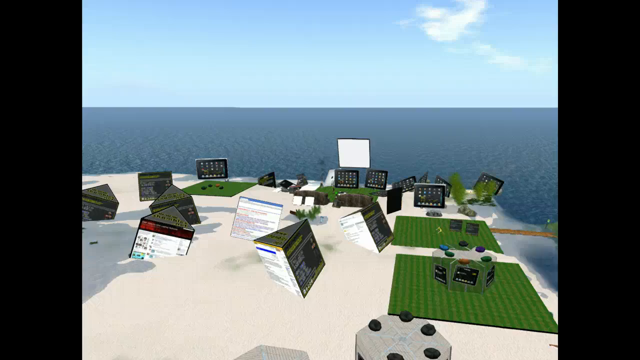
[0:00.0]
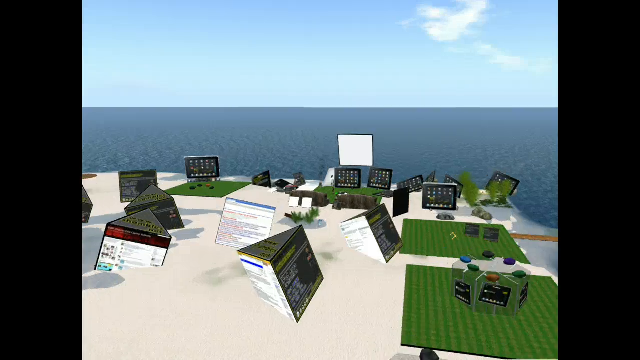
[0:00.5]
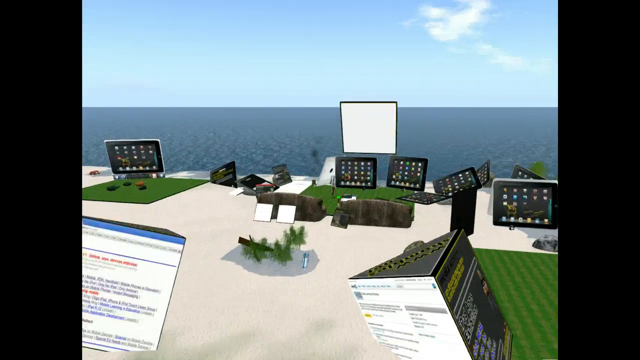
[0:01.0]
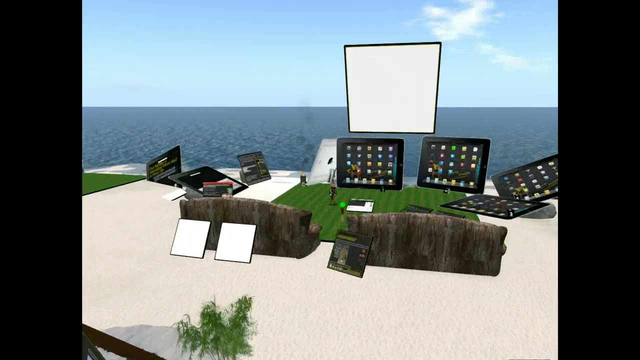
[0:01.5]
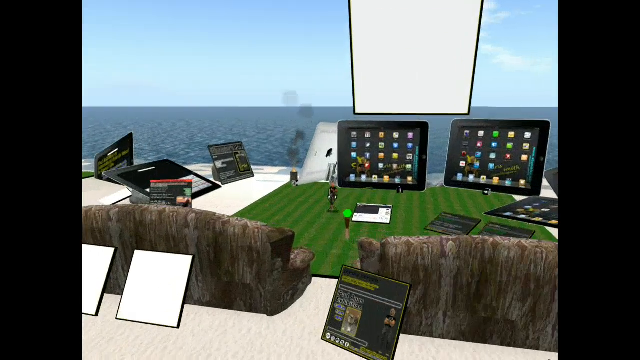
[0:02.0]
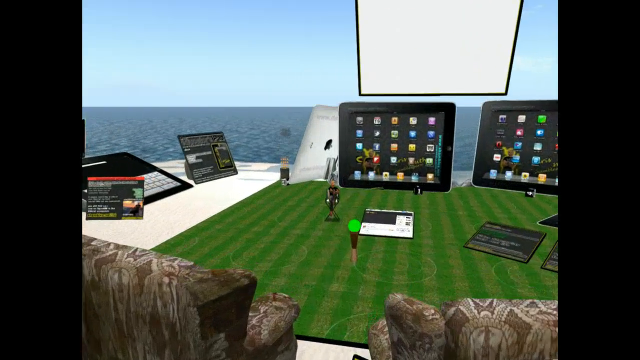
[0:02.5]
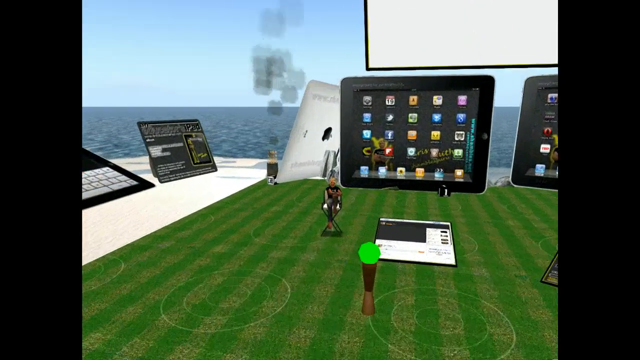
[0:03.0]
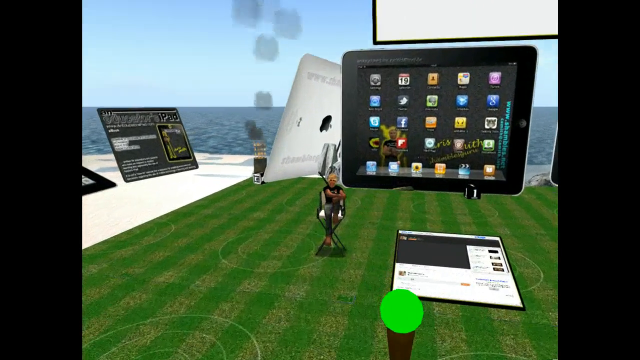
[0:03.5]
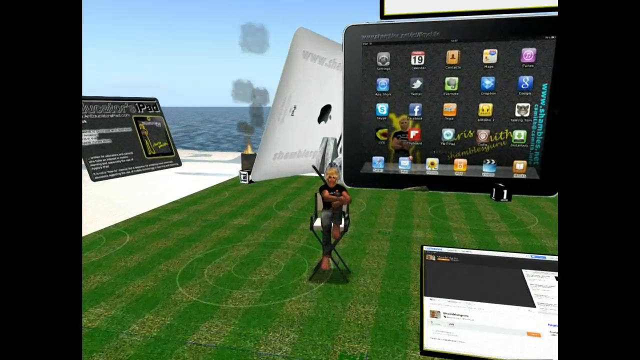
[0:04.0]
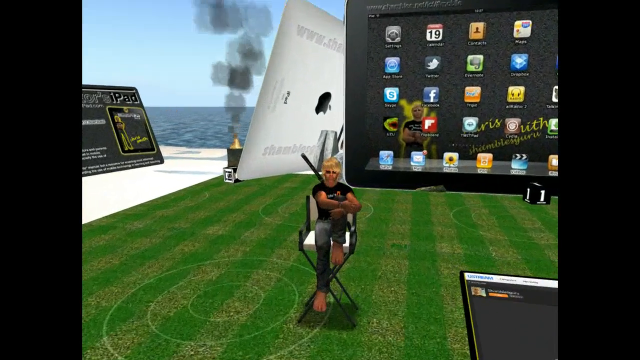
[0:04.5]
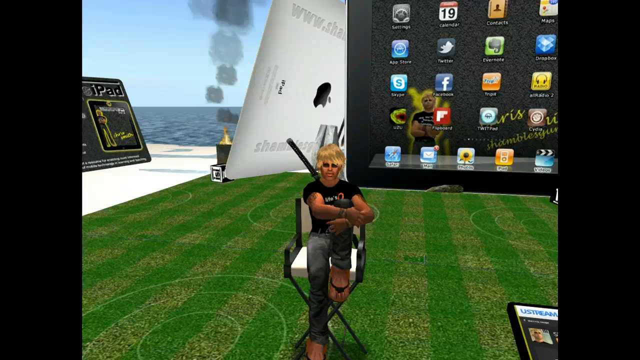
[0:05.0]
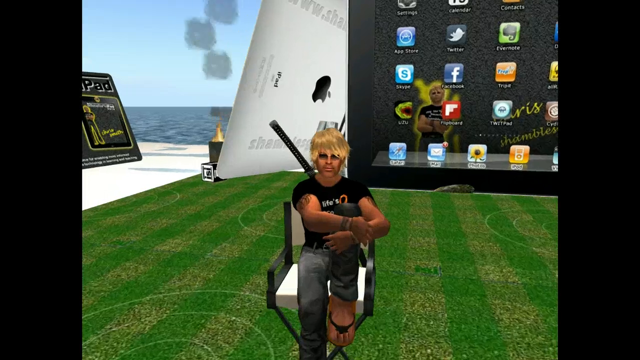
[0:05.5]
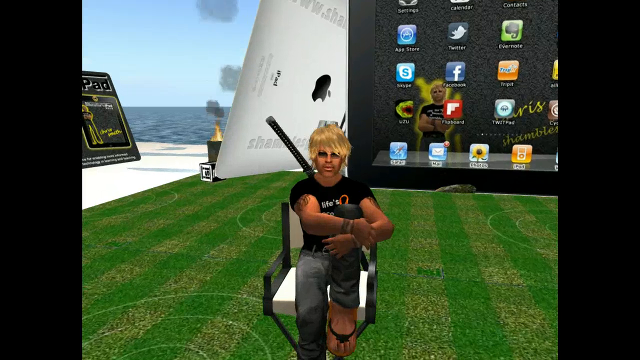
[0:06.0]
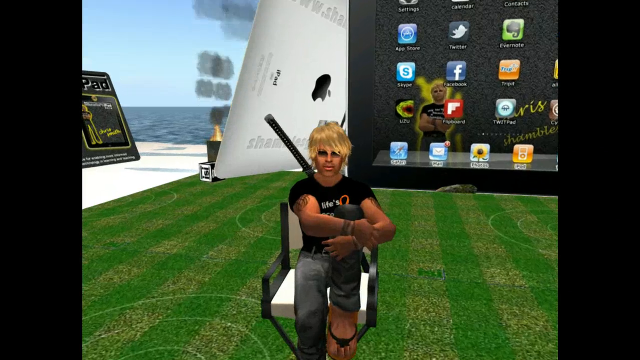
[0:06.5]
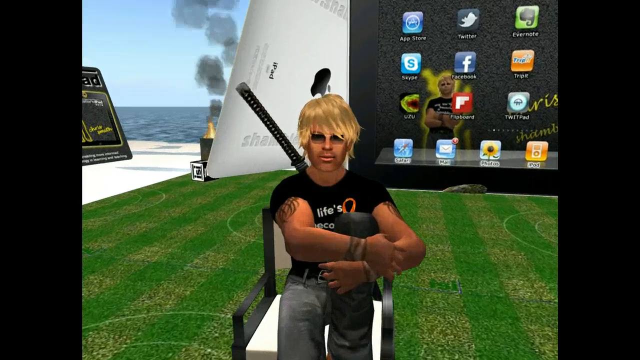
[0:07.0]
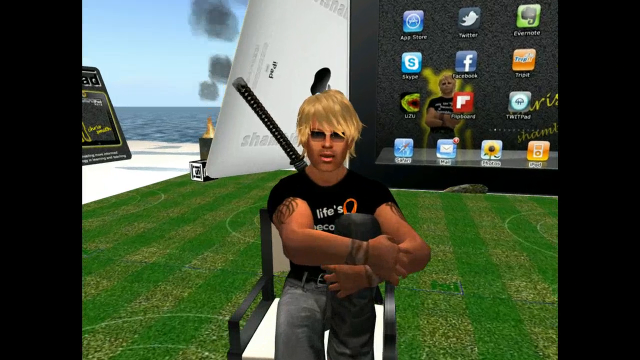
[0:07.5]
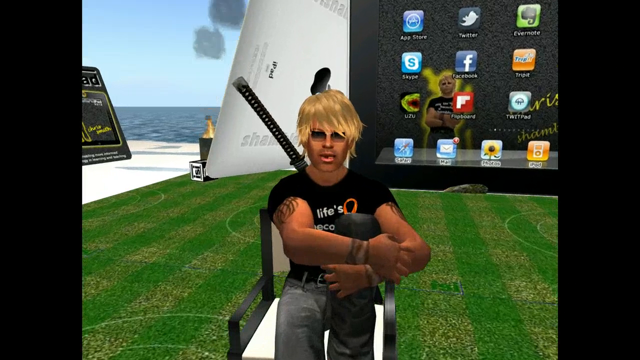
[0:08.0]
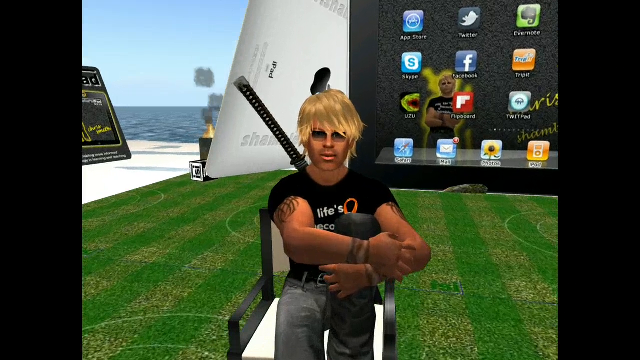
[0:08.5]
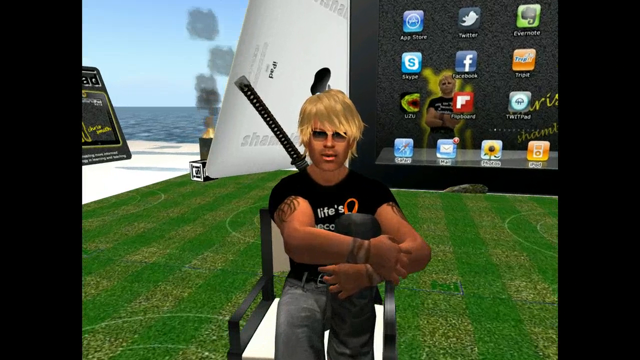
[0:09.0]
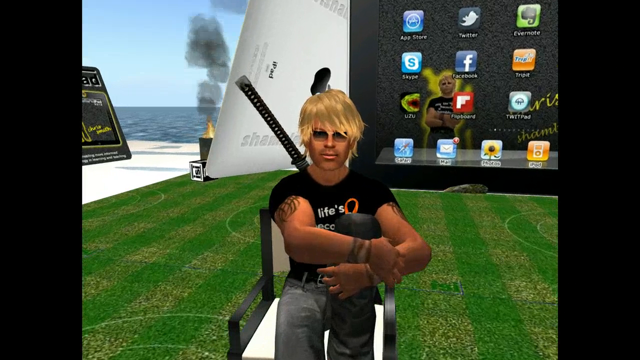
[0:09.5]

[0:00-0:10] The camera moves toward a man sitting on a black and white chair. He wears a black t-shirt and slippers, has short brown hair, and has one of his legs up on the chair. The chair is in a field of green grass. Behind him is a very big screen, the screen of a PC showing menu buttons, and behind that is another Apple screen showing the Apple. On its way to him, the camera passes brown sofas. In front of the other screen, smoke comes out and rises upwards. Opposite the smoke there is yet another screen.